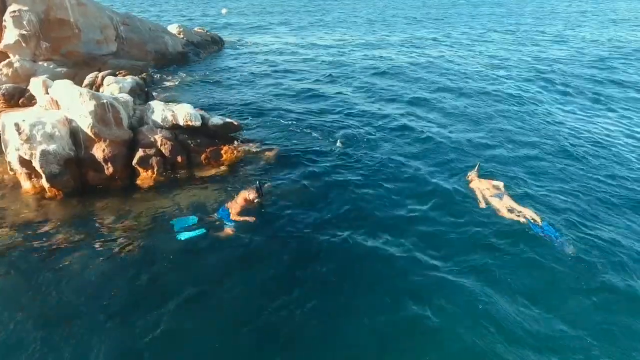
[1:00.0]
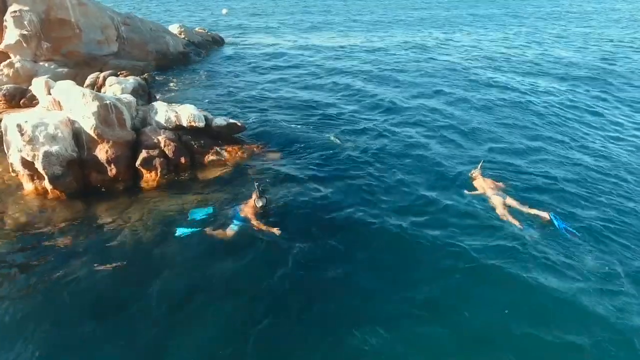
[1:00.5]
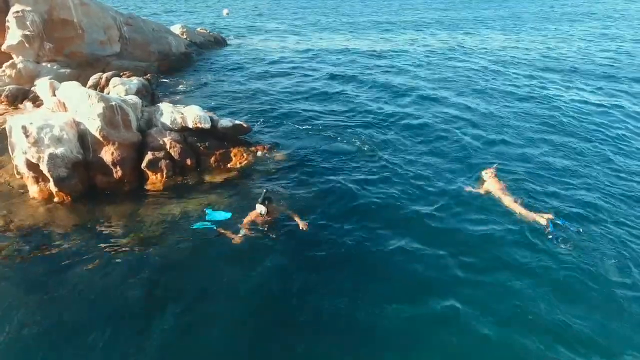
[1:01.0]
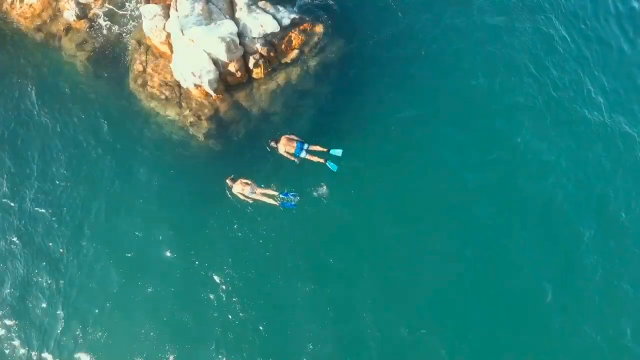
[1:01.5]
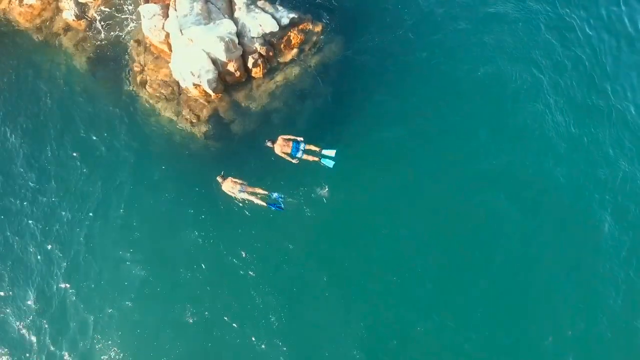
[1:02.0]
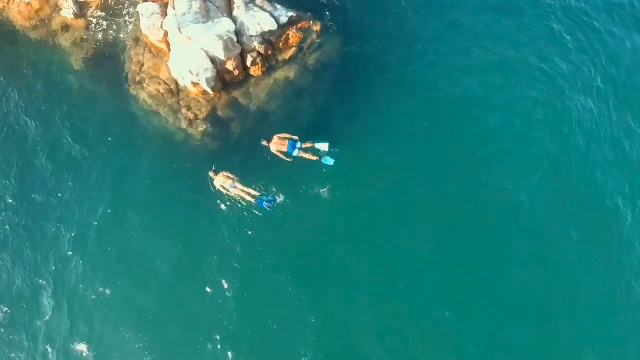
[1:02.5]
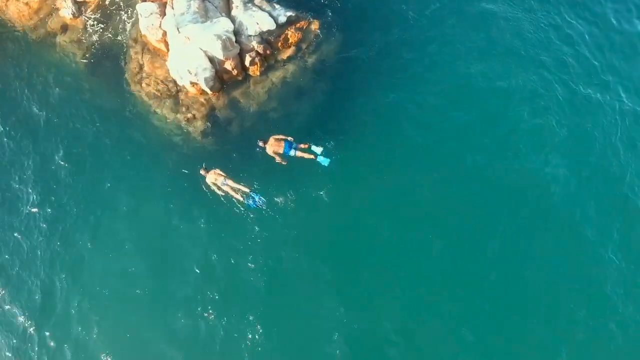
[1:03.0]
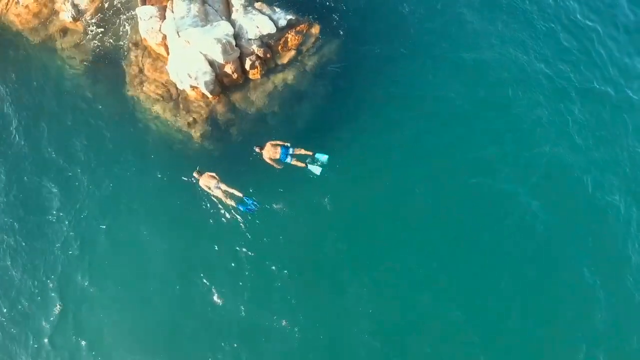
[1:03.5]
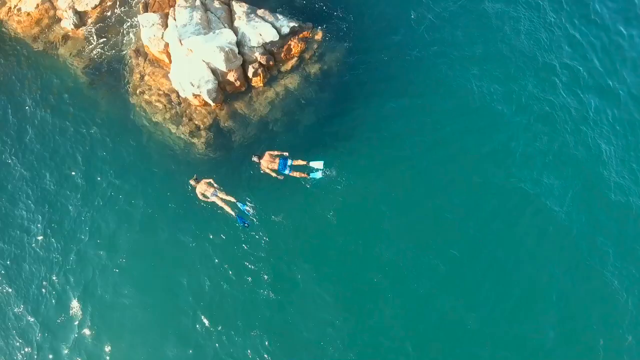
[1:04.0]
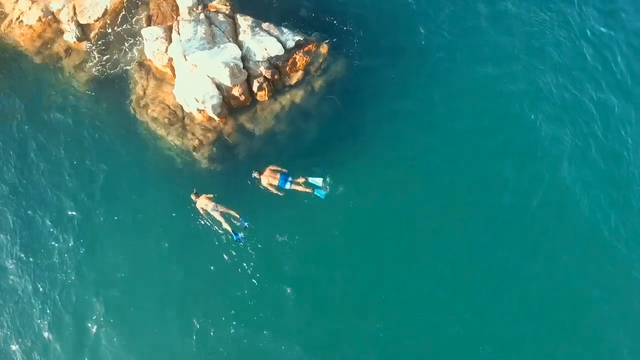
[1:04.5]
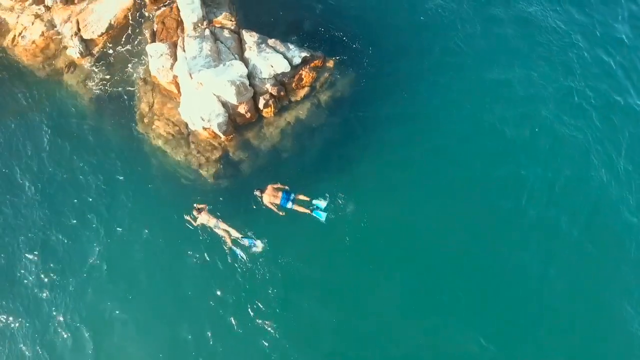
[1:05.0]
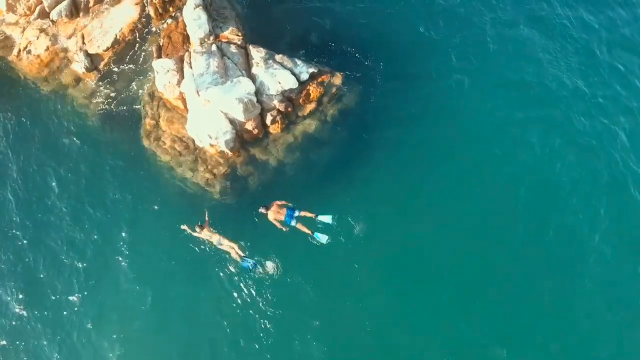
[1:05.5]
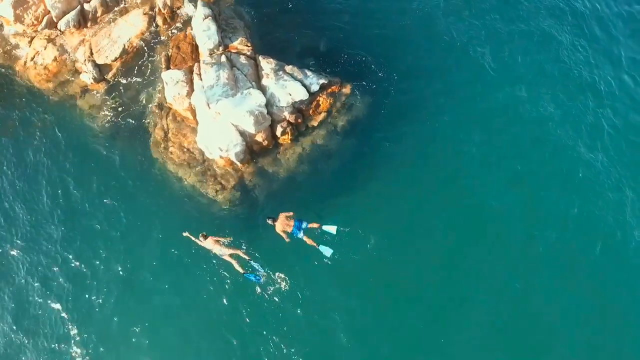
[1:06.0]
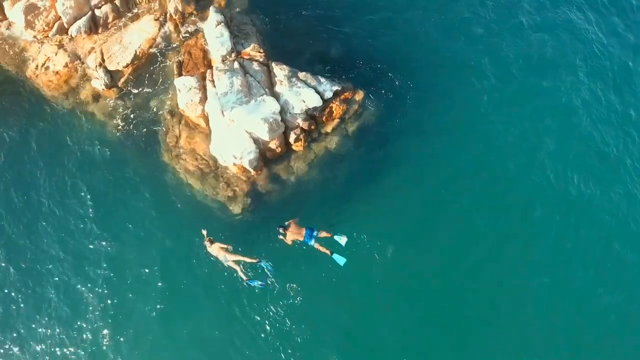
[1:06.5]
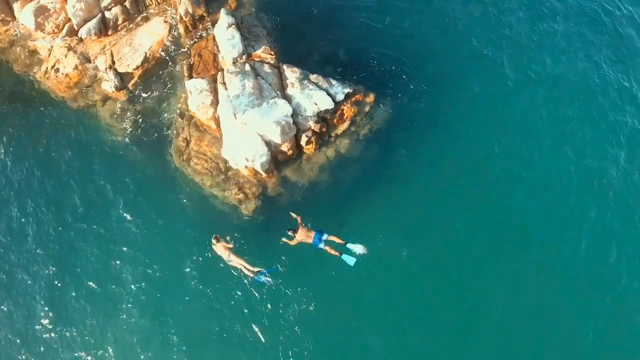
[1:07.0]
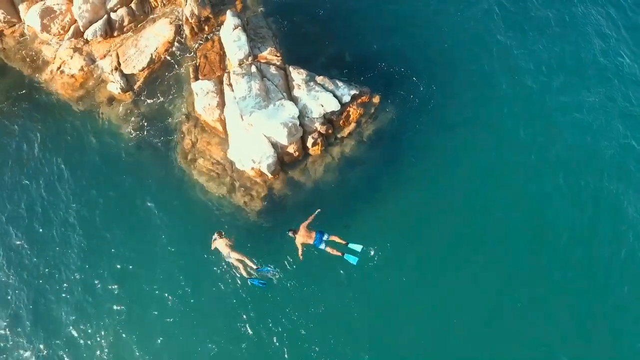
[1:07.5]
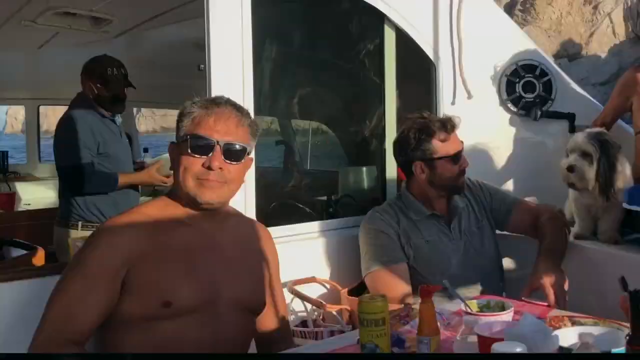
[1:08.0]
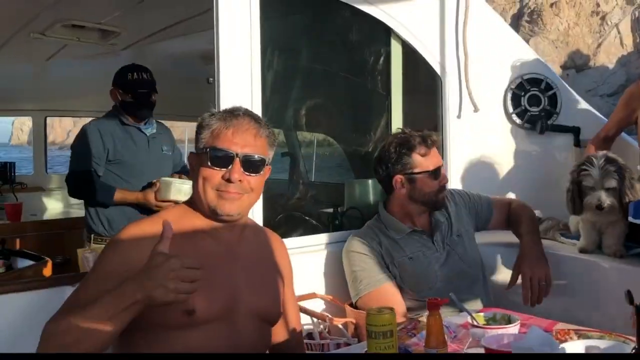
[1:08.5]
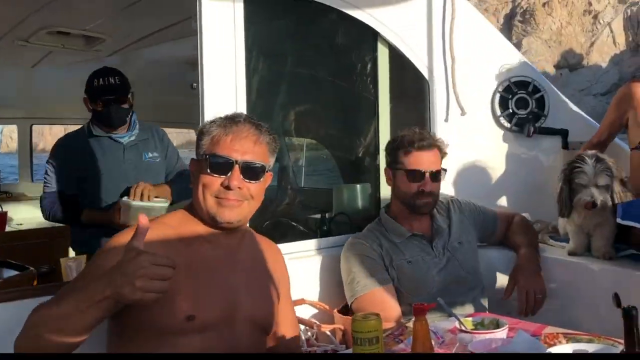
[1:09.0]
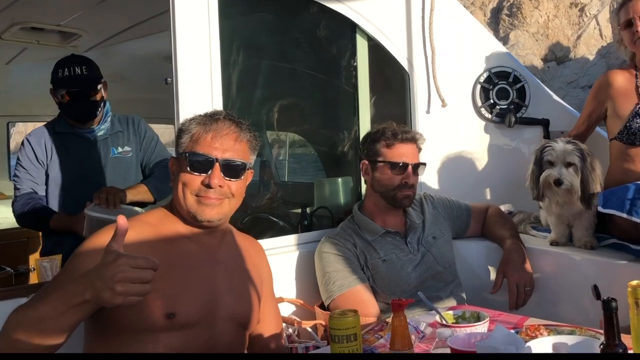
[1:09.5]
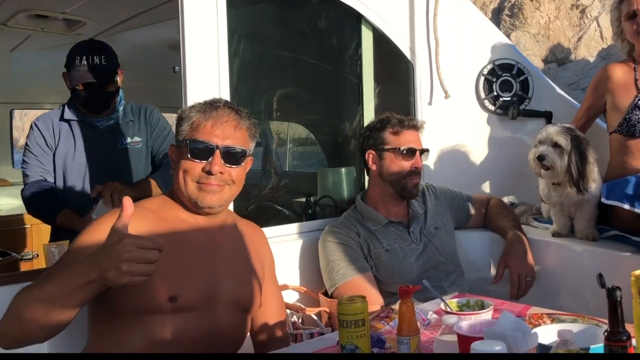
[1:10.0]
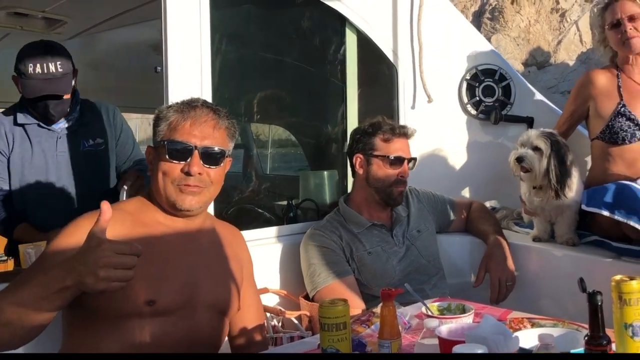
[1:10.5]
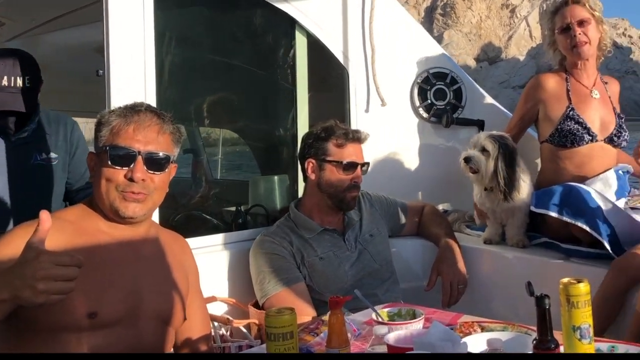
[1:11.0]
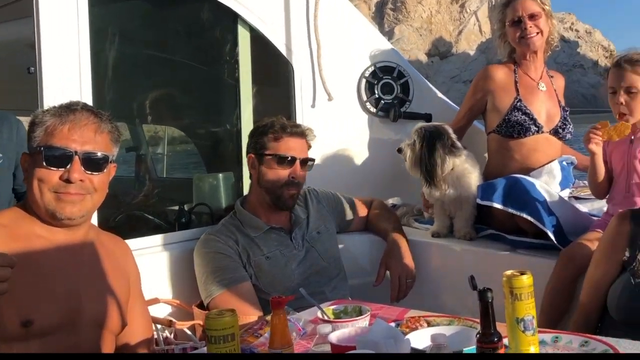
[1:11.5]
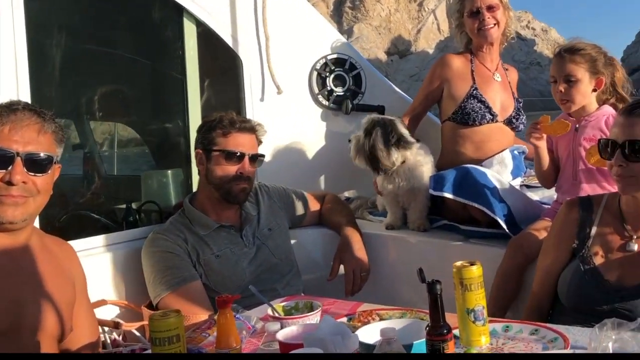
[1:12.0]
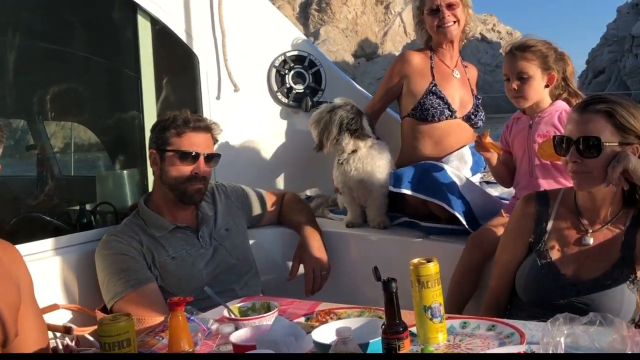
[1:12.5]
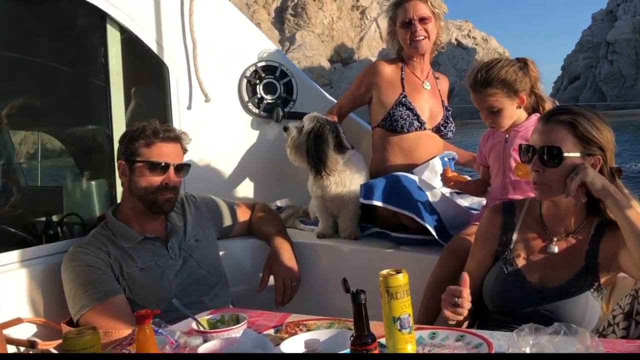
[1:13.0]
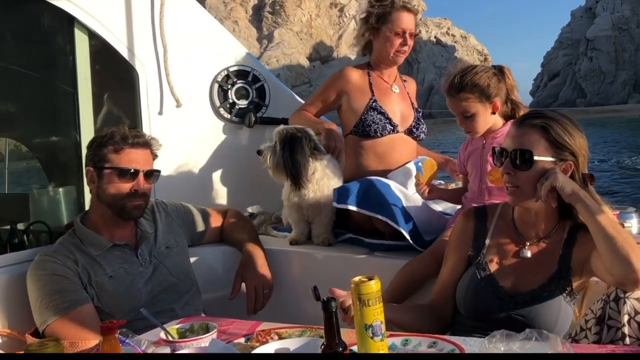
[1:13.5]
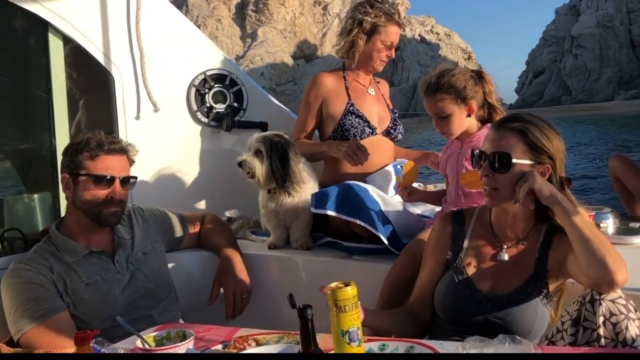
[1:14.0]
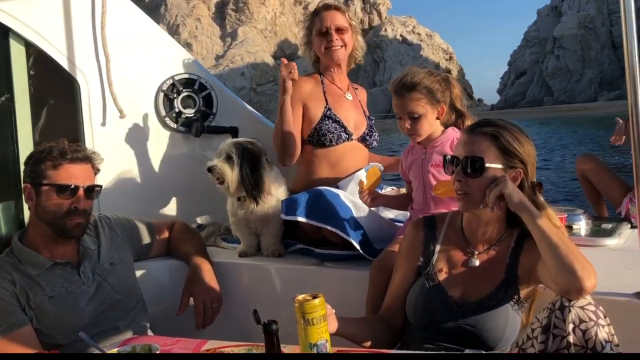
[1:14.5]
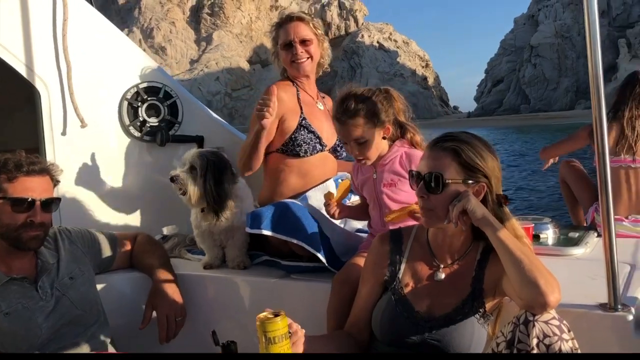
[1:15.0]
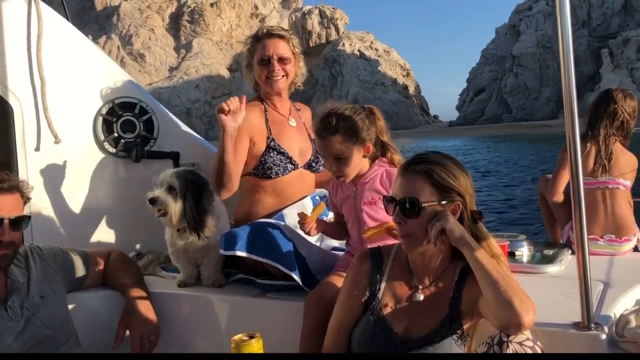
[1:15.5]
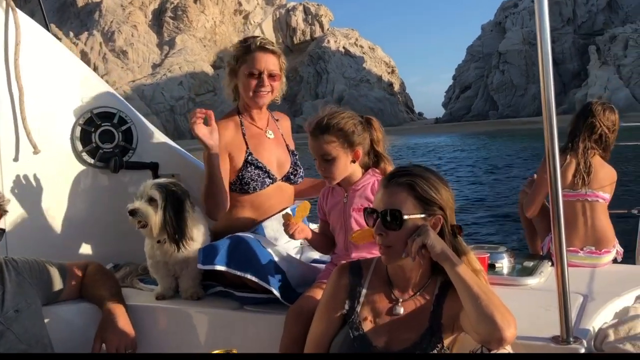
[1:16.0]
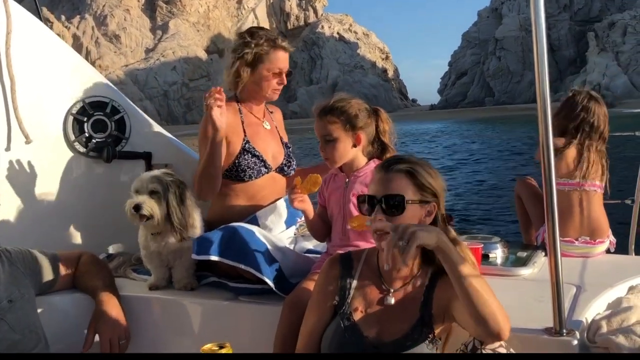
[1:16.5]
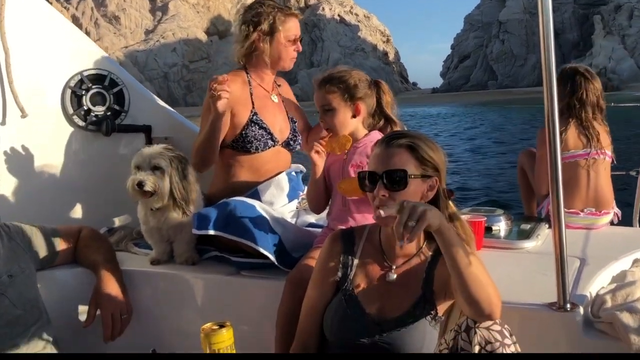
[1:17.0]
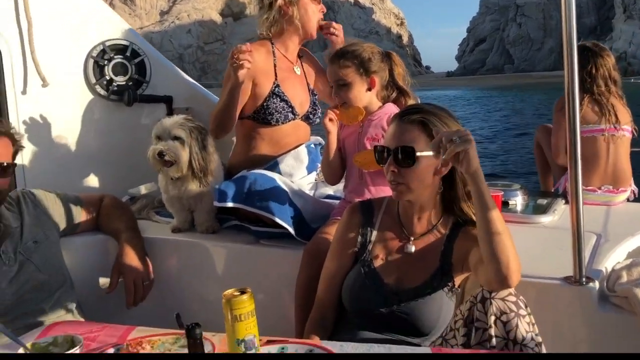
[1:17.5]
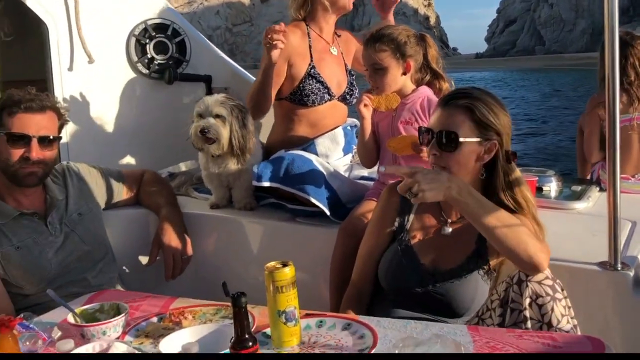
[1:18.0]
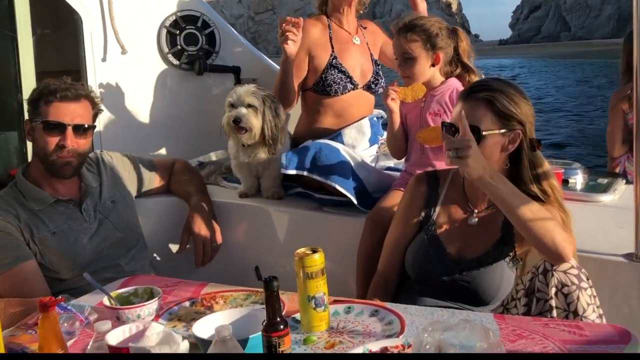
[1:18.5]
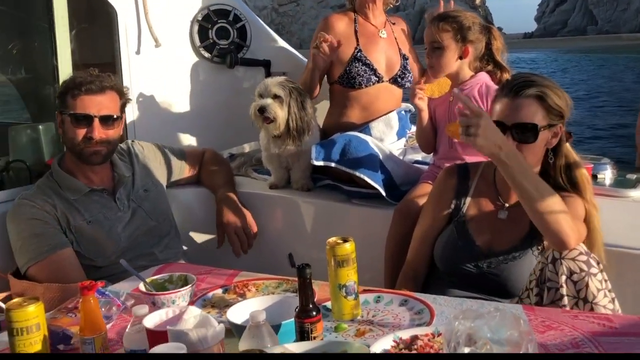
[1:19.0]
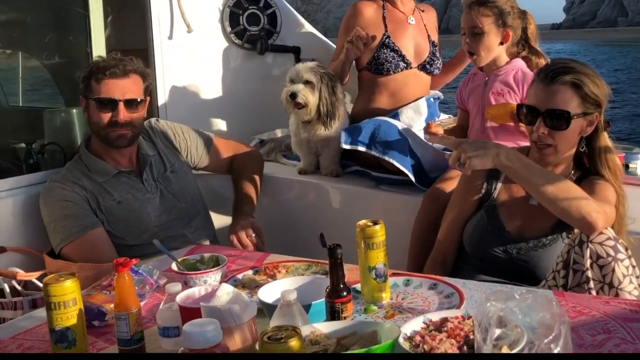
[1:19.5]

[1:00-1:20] A drone films directly above two people snorkeling in the water. A man wears blue shorts and light blue flippers, and to his left a woman wears a gray bikini and dark blue flippers. Both wear snorkels and face masks and float in the water. The video cuts to a man sitting on a boat, wearing black sunglasses and no shirt, giving a thumbs up to the camera. To his left sits a man in a short-sleeved brown shirt and sunglasses, and in front of them is a table with food on it. To the left of that man is a white and black hairy dog. Behind the dog is a woman with blonde hair wearing a black bikini top, and in front of her is a little girl in a pink zipped-up shirt with brown hair pulled back in a ponytail. Sitting in front of the girl is a woman in a black tank top and sunglasses, with long brown hair pulled back into a ponytail.